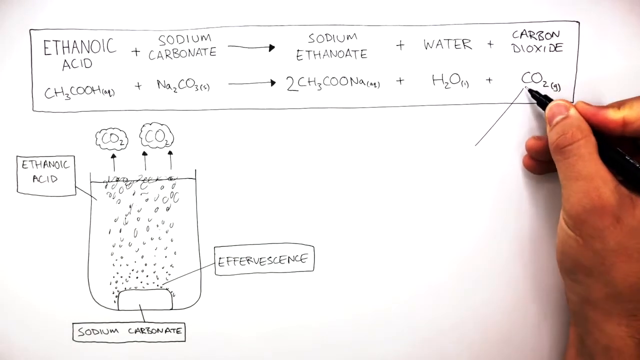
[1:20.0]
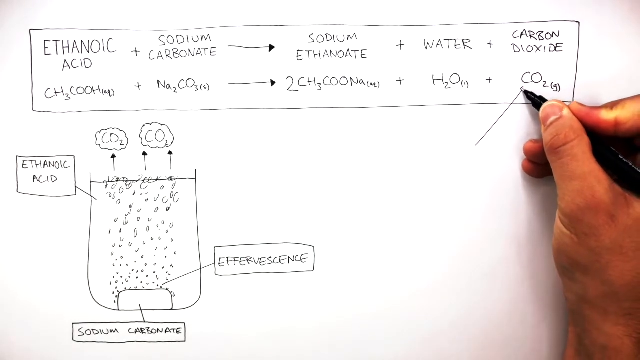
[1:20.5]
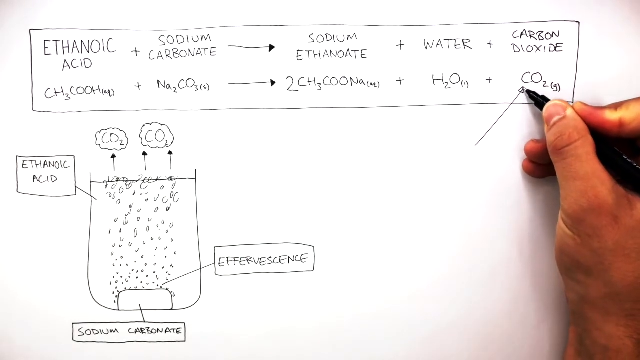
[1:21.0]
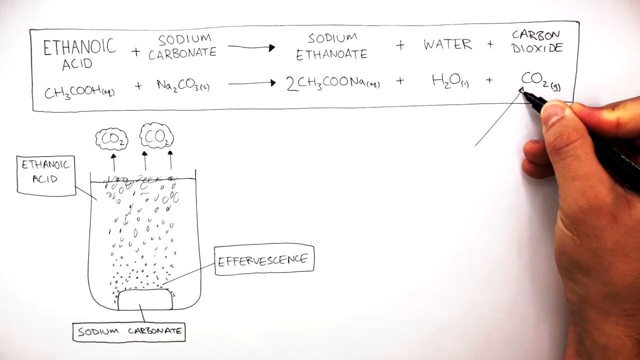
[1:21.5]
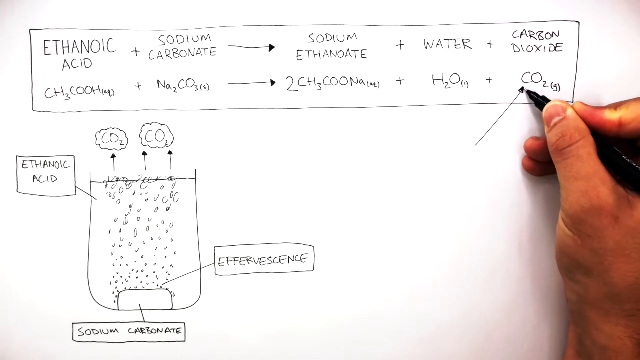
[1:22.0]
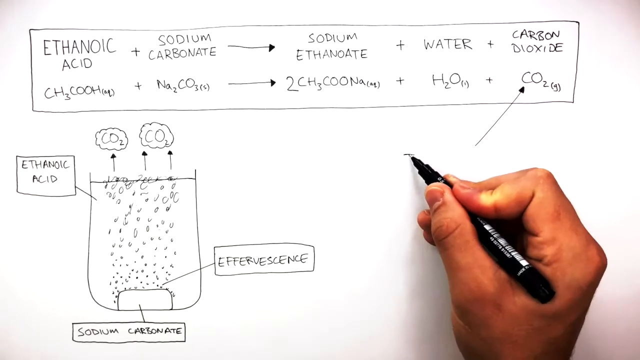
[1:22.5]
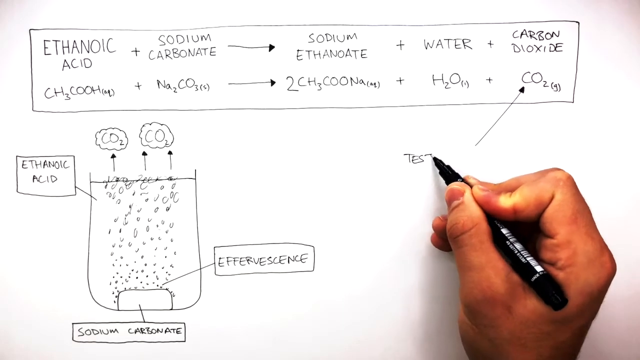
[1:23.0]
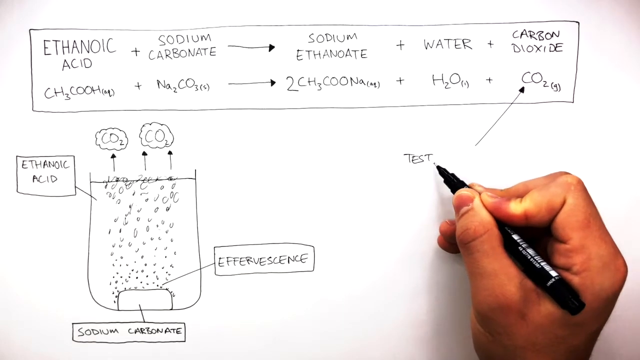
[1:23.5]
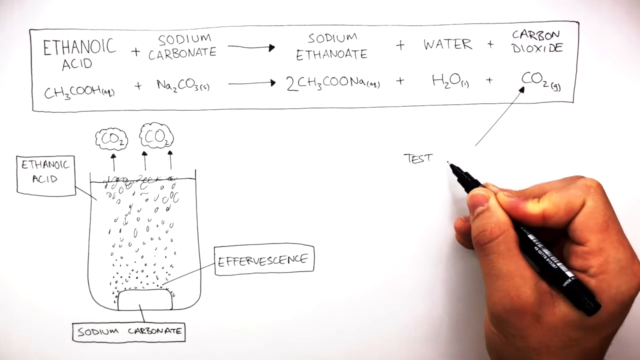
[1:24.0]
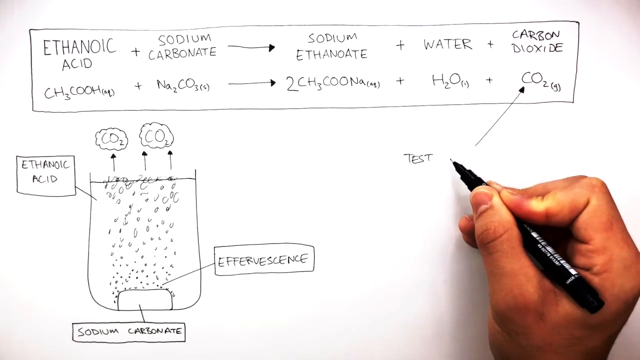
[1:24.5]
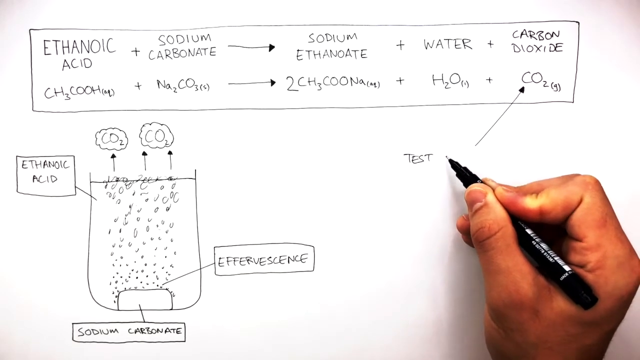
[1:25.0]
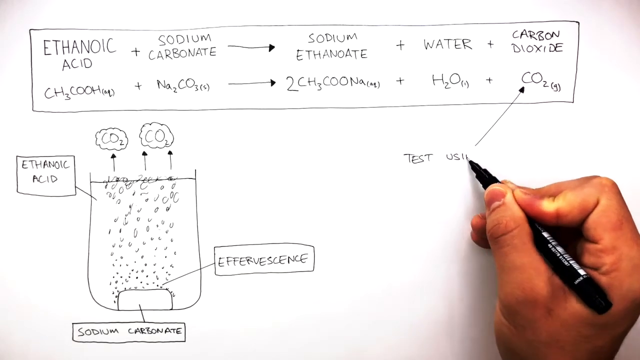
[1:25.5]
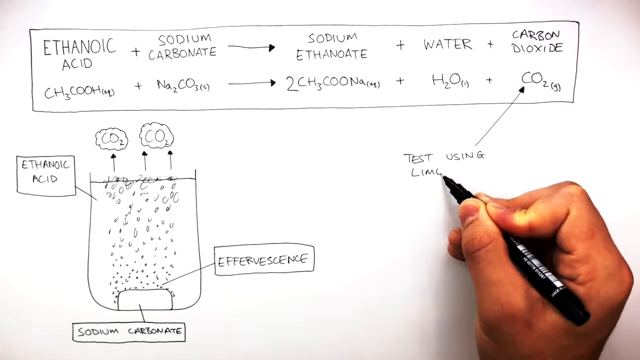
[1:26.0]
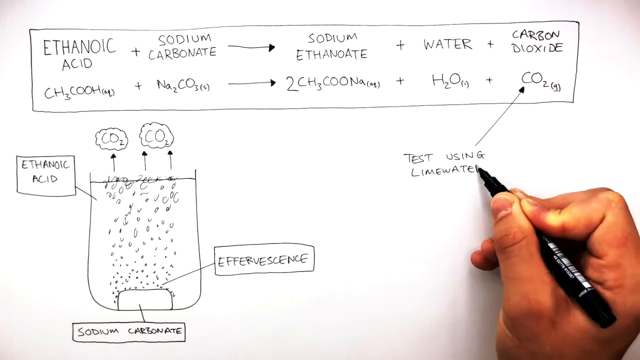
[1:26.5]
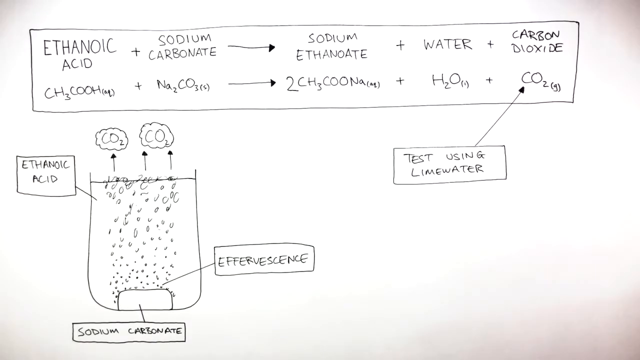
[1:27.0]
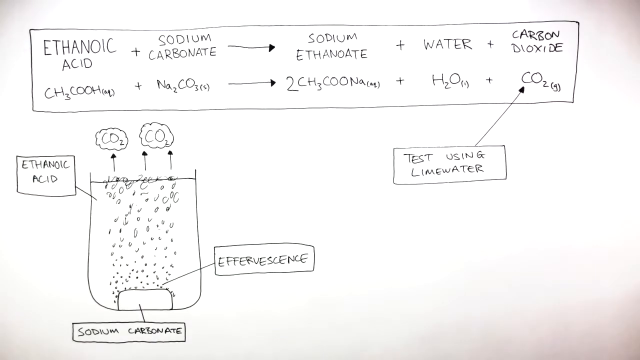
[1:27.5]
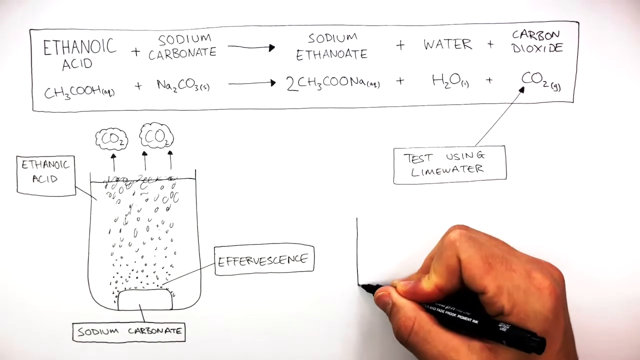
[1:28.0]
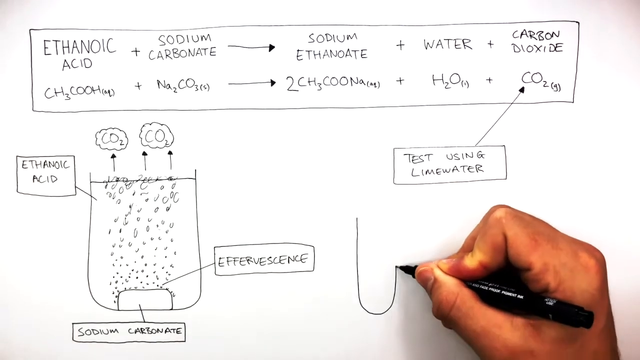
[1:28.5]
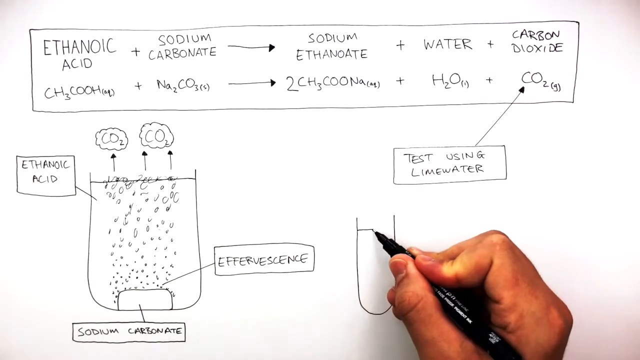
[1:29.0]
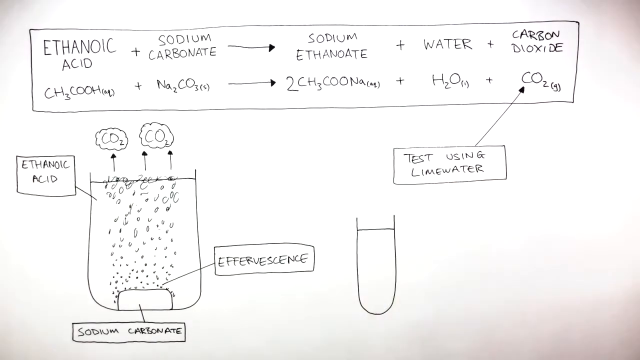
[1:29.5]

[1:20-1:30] He draws an arrow toward the CO2 gas part of the chemical reaction equation above and labels the arrow "test using lime water". He then begins to draw a small test tube below this label. Still visible on screen is the text box with ethanoic acid plus sodium carbonate and a reaction arrow showing sodium ethanoate, water and carbon dioxide being produced, with the same reaction written below in chemical formula form: CH3COOH plus Na2CO3 gives 2CH3COONa plus H2O plus CO2, where the CO2 meets the arrow the person is drawing with their right hand. The drawing of the ethanoic acid and sodium carbonate reaction is in the bottom left-hand corner of the screen: the ethanoic acid is dissolved in a beaker, a sodium carbonate tablet is at the bottom of the beaker, and bubbles come off the tablet, indicating effervescence. The drawing is done in felt pen by the presenter of the video.